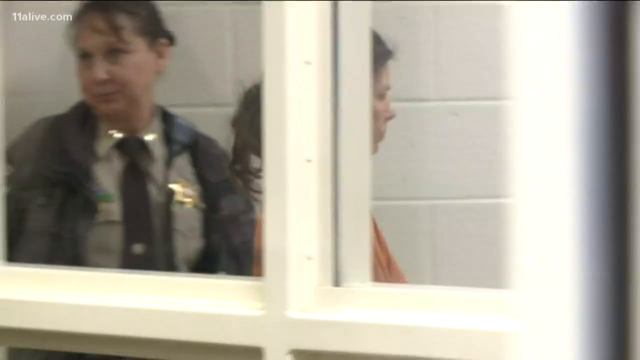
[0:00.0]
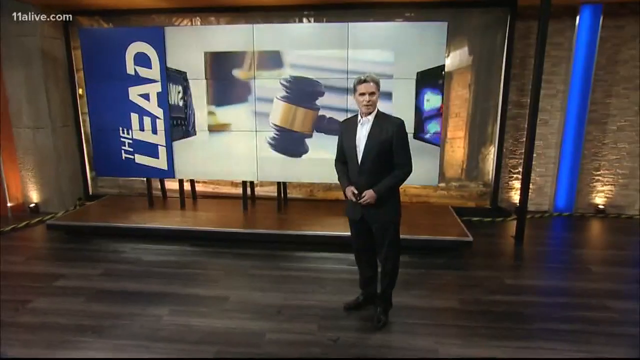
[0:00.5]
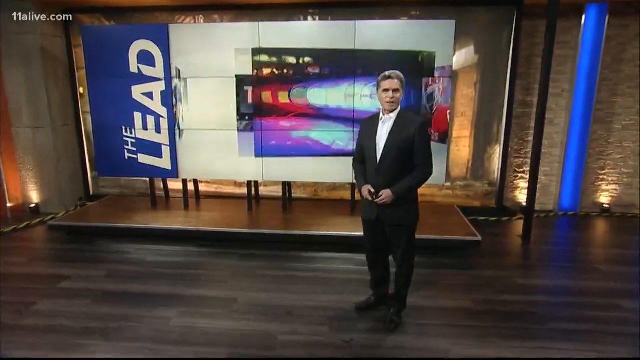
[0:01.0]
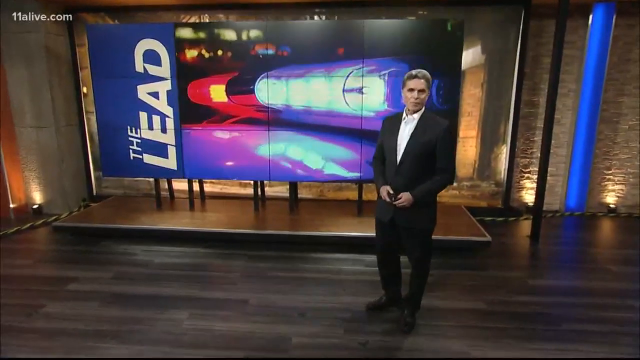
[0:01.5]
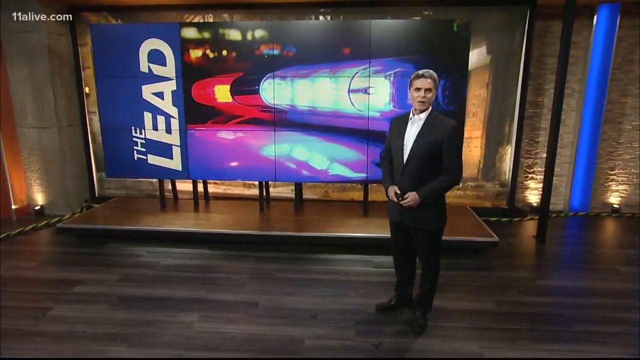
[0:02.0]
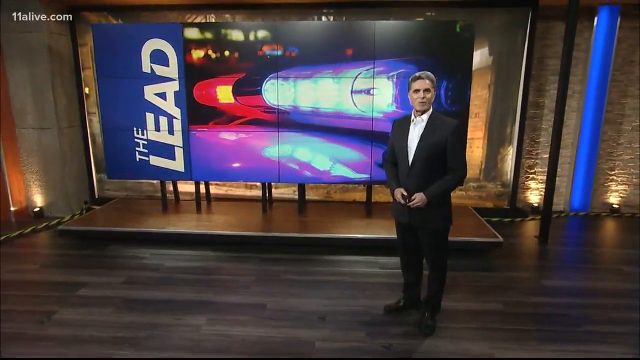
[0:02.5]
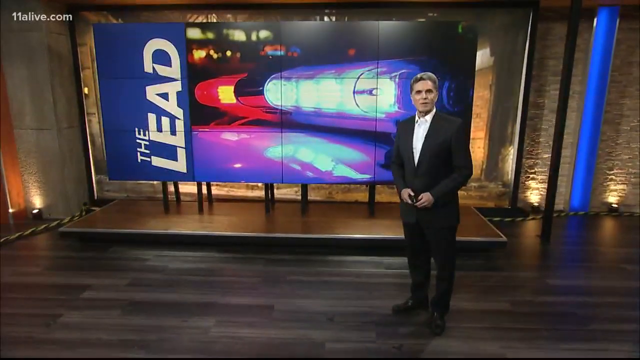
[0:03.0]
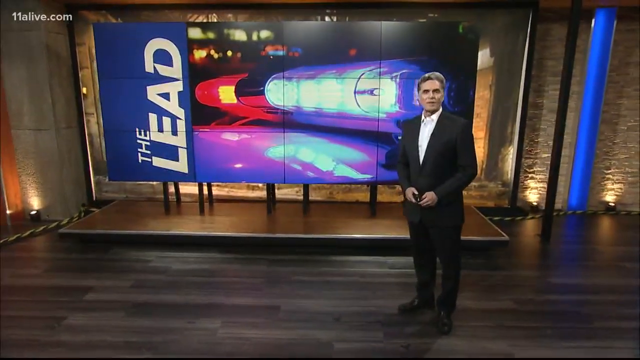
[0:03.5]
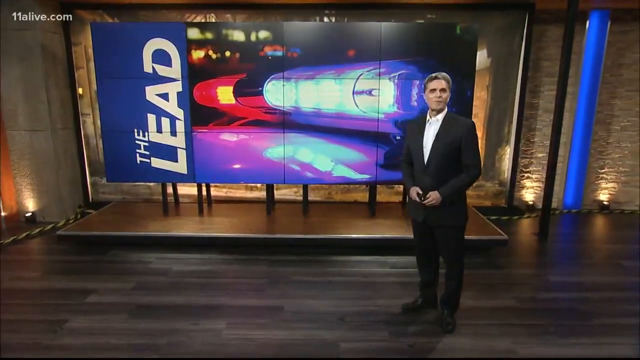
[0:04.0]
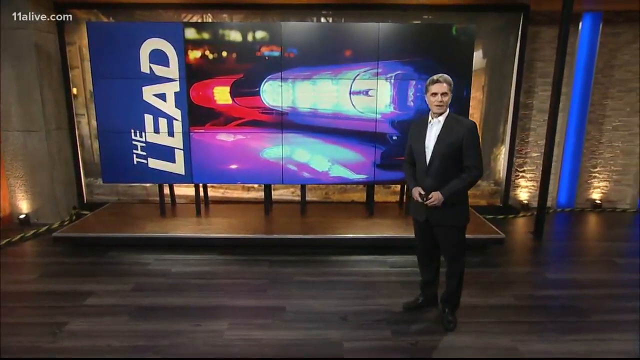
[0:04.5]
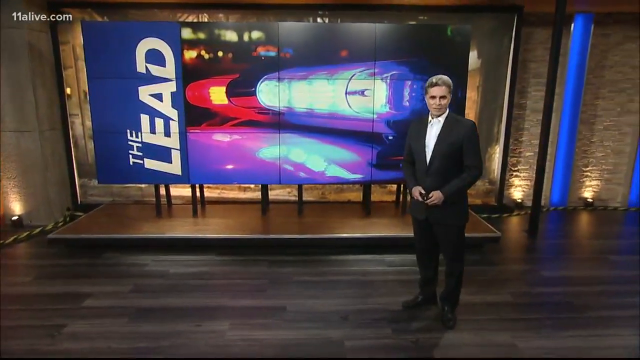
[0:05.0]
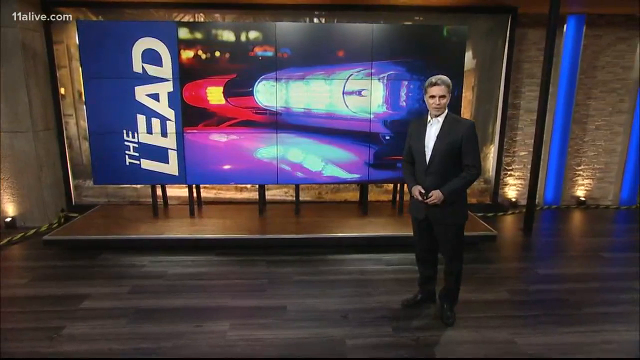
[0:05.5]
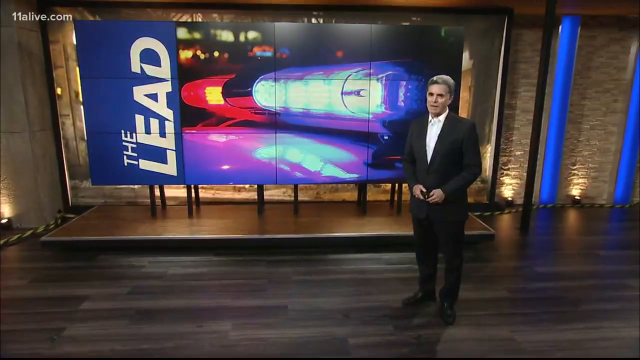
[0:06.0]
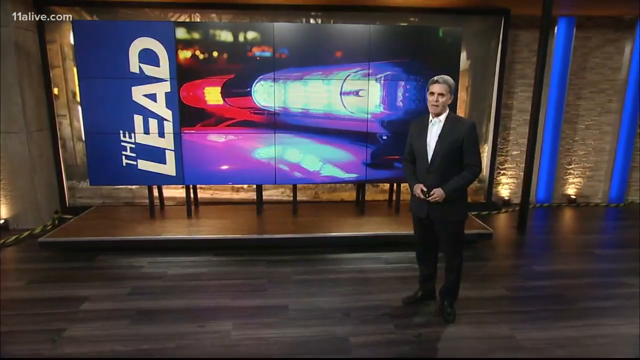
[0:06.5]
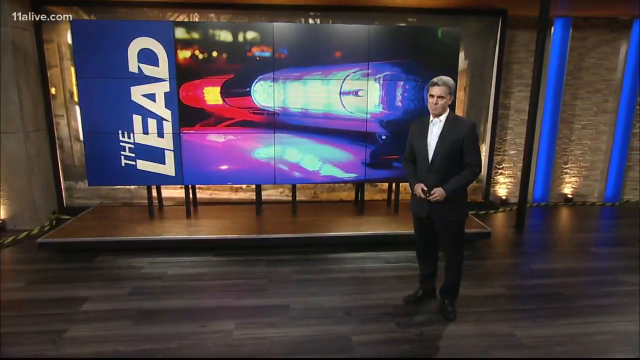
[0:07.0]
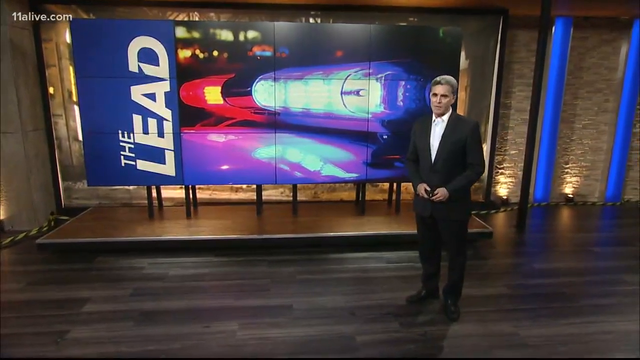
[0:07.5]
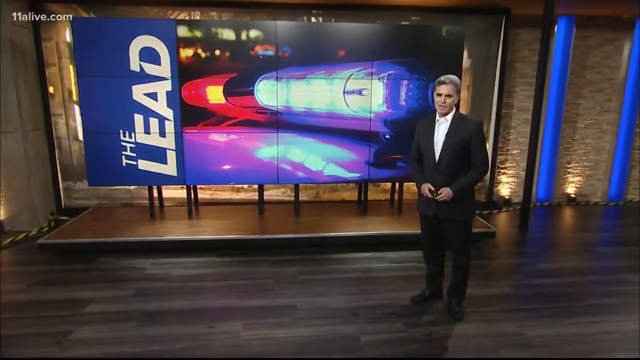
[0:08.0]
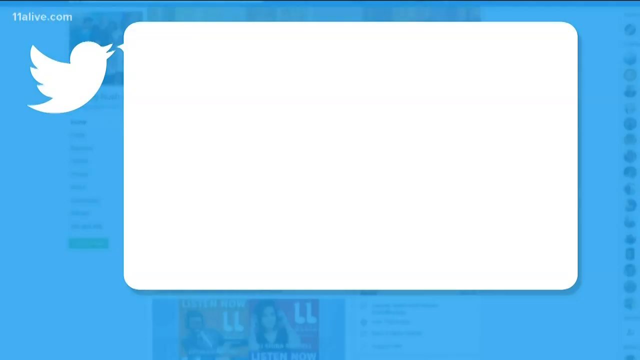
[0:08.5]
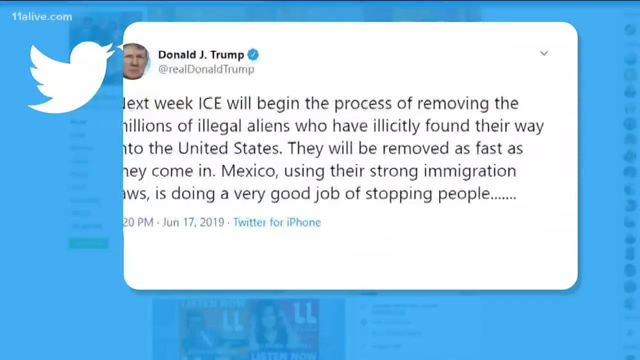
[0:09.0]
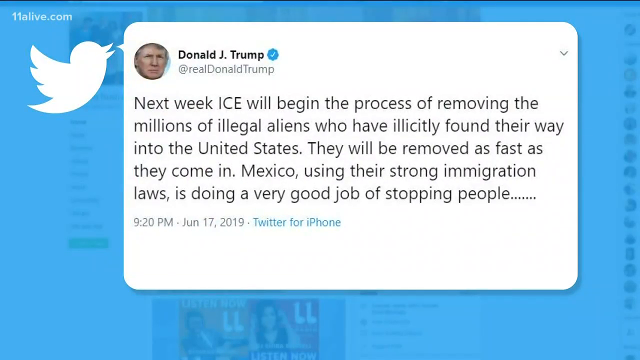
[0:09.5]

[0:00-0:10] A policewoman with her hair tied up, in full uniform, is with a criminal in an orange jumpsuit. Next, a man is talking in front of the show The Lead; the footage is from 11alive.com. A tweet from Donald Trump on Twitter then appears, apparently concerning ICE. The footage seems to be from a news source and looks legitimate.